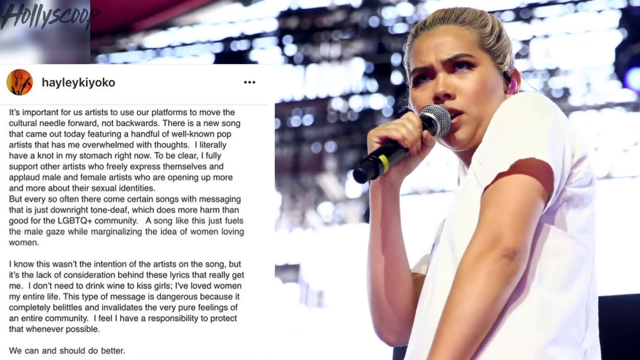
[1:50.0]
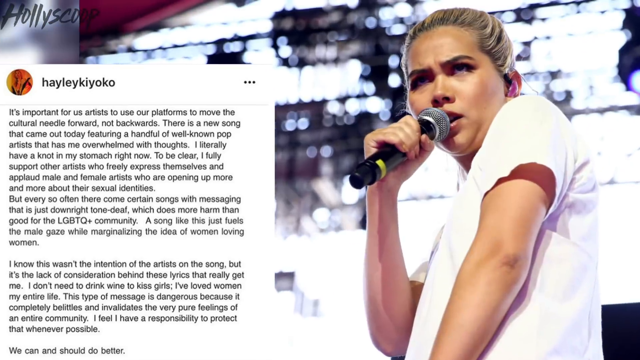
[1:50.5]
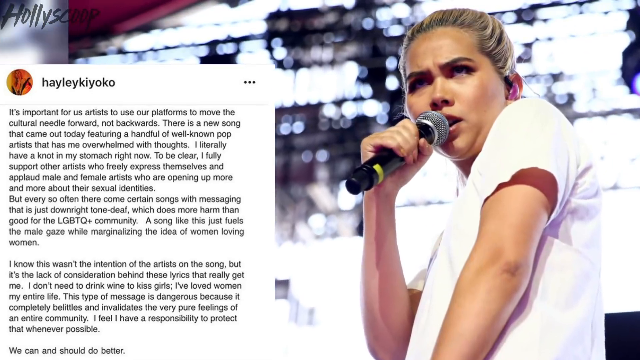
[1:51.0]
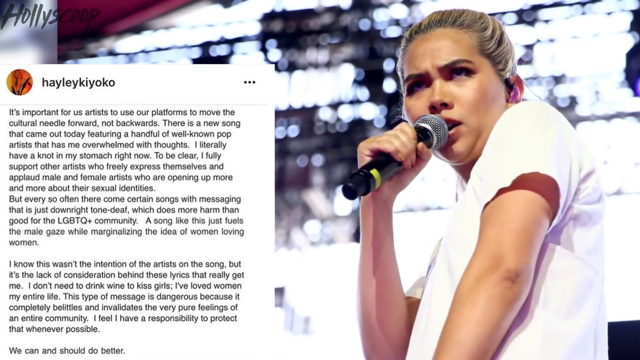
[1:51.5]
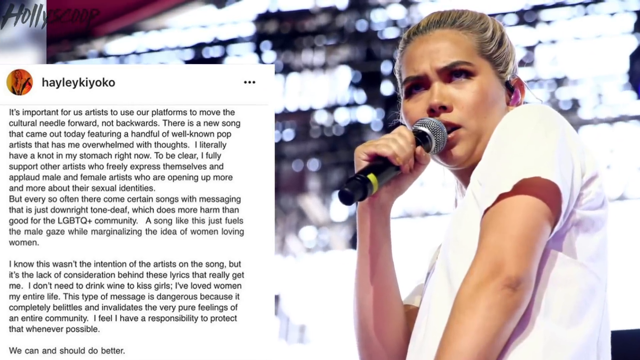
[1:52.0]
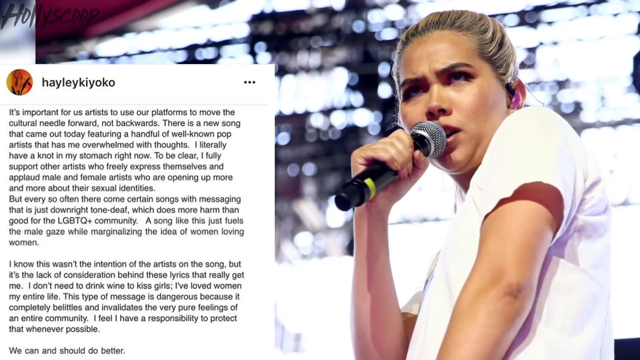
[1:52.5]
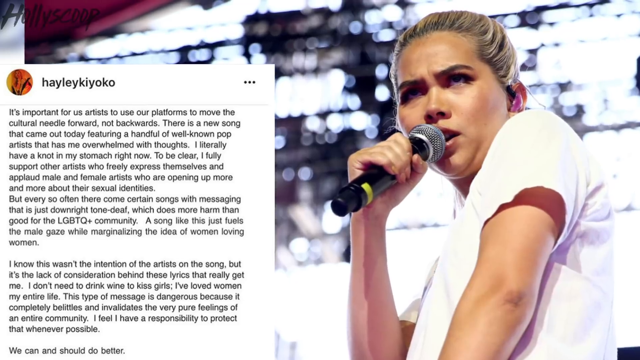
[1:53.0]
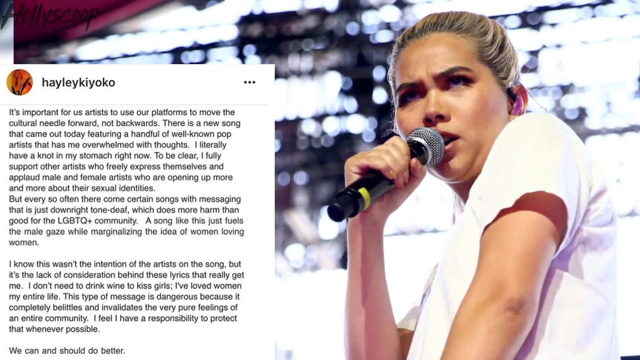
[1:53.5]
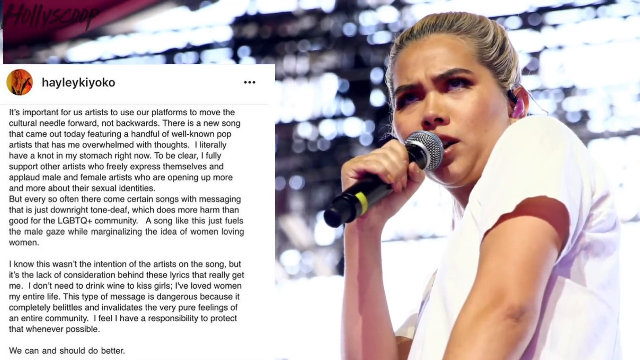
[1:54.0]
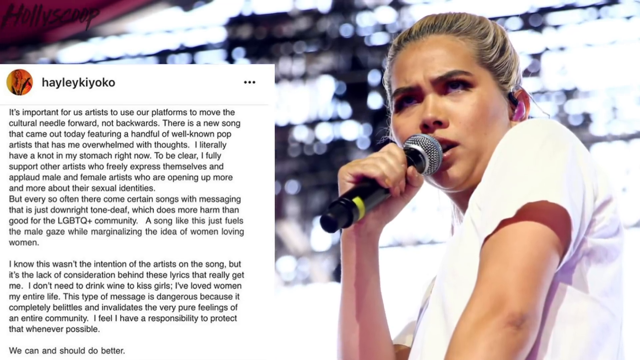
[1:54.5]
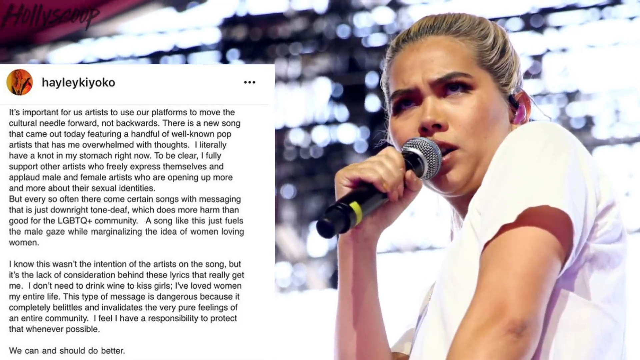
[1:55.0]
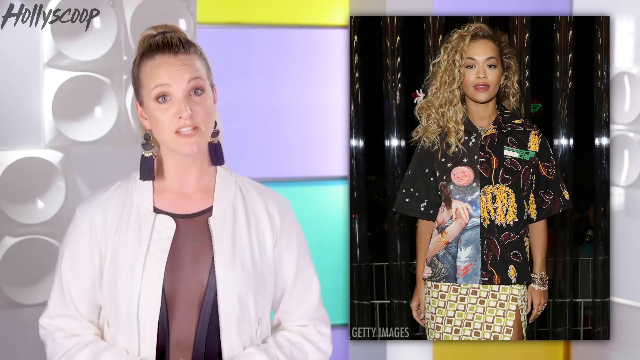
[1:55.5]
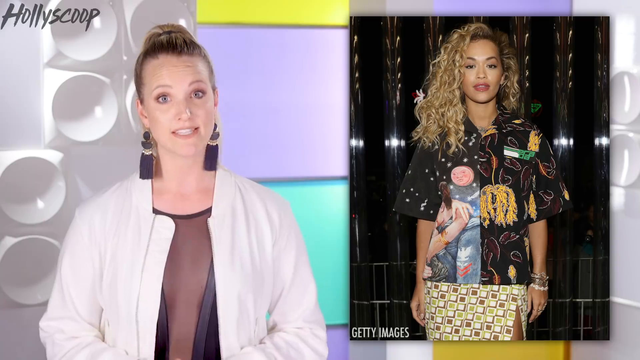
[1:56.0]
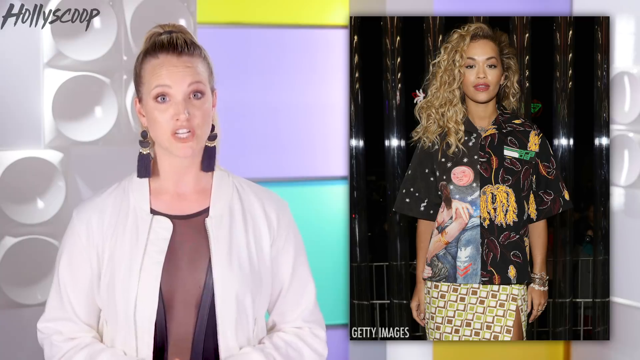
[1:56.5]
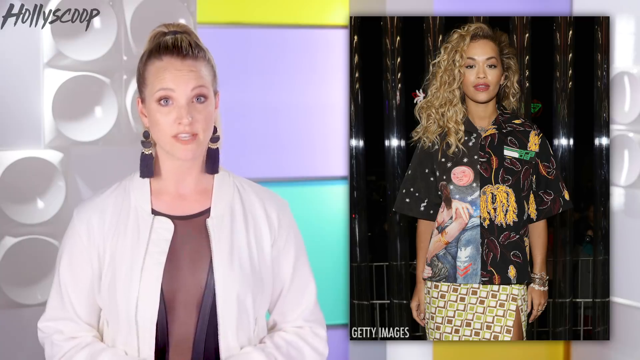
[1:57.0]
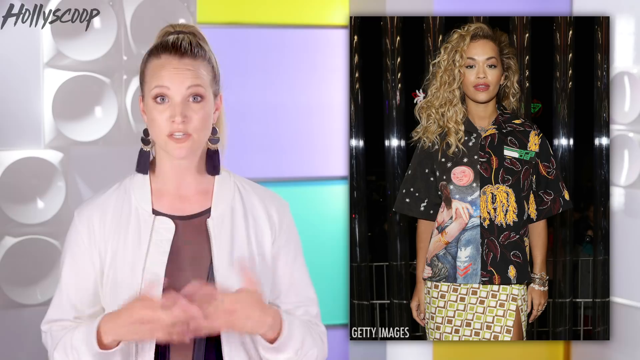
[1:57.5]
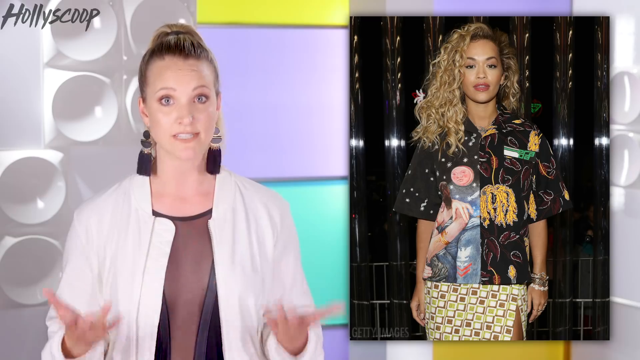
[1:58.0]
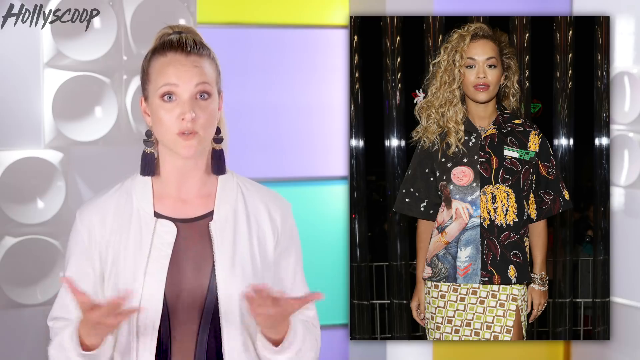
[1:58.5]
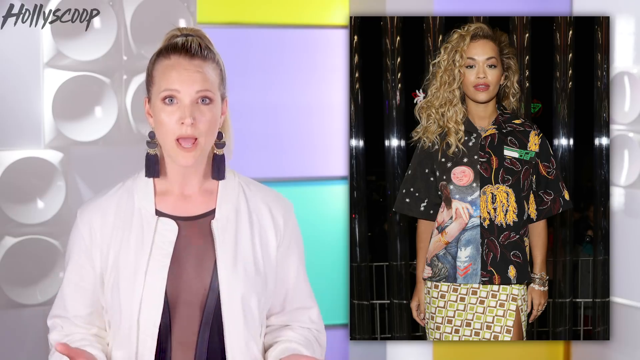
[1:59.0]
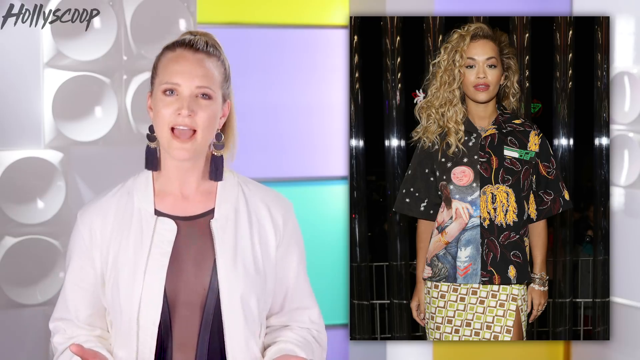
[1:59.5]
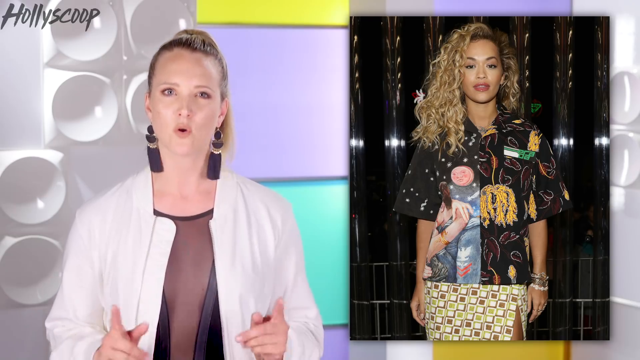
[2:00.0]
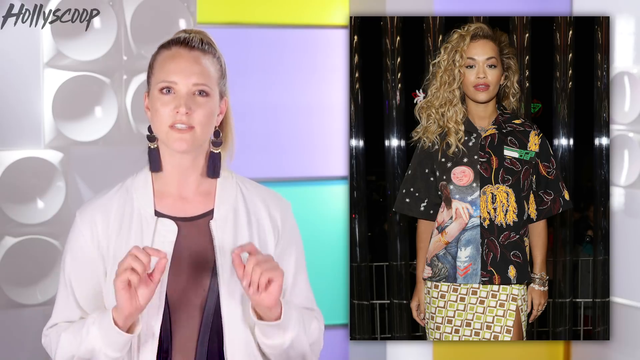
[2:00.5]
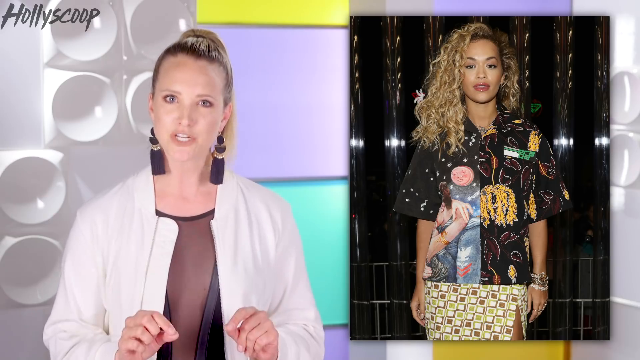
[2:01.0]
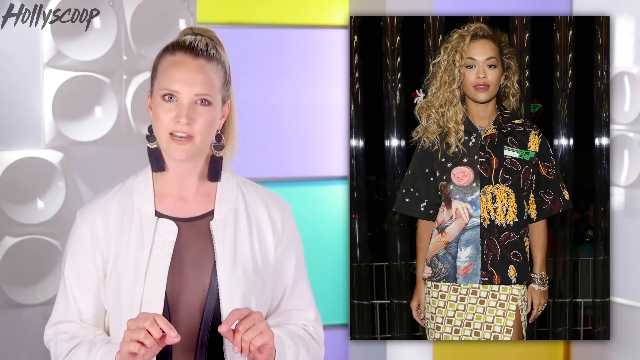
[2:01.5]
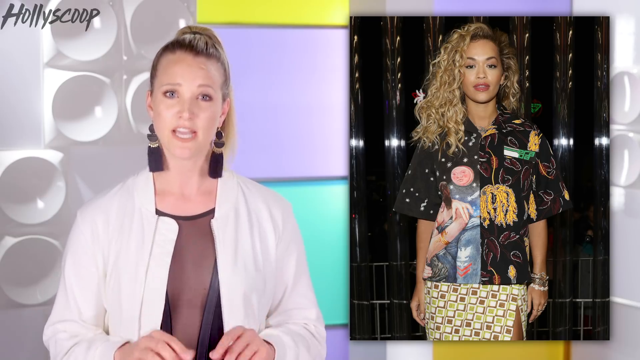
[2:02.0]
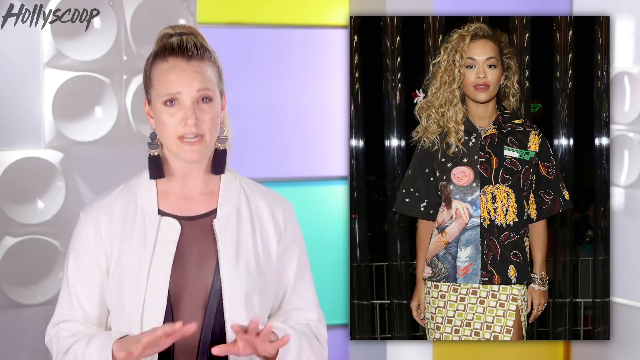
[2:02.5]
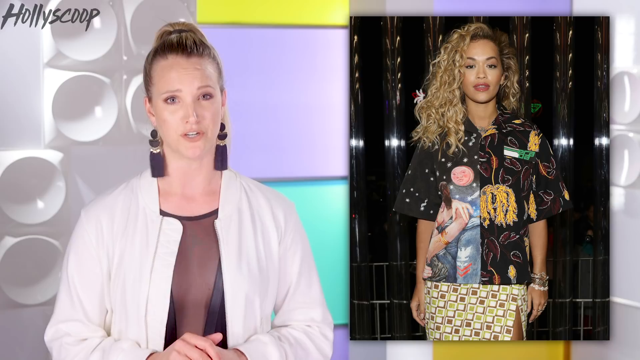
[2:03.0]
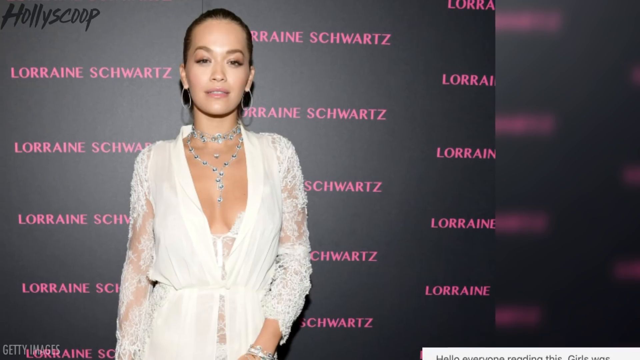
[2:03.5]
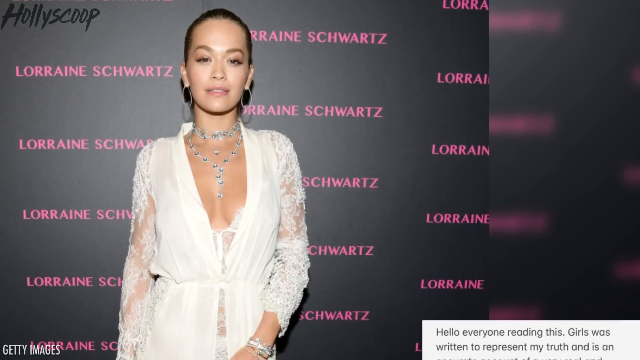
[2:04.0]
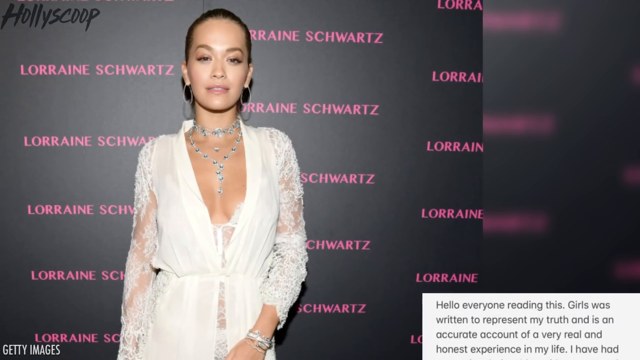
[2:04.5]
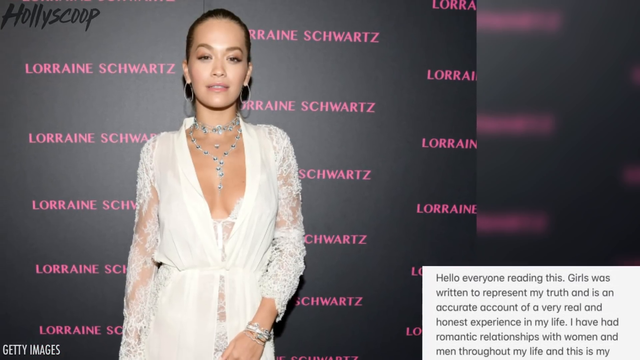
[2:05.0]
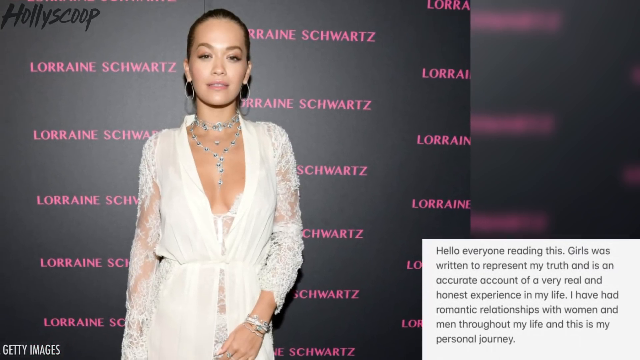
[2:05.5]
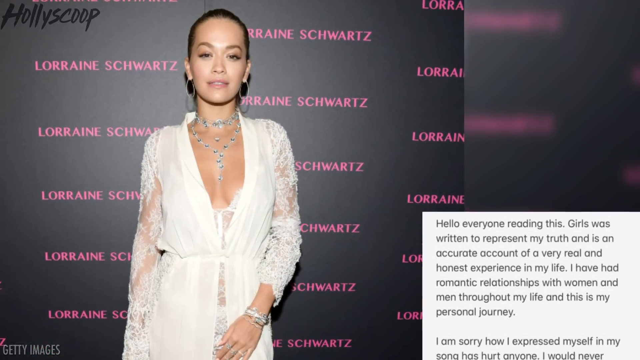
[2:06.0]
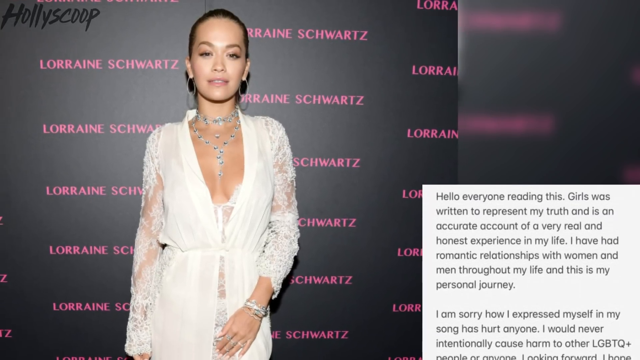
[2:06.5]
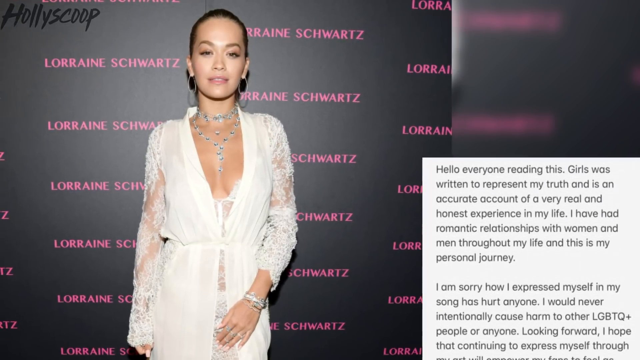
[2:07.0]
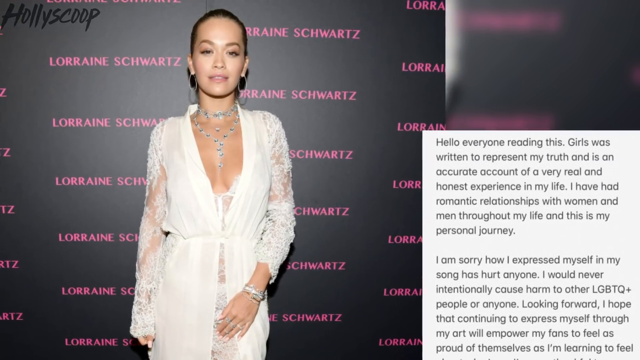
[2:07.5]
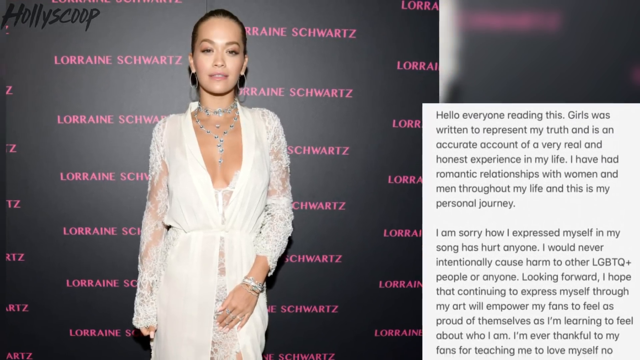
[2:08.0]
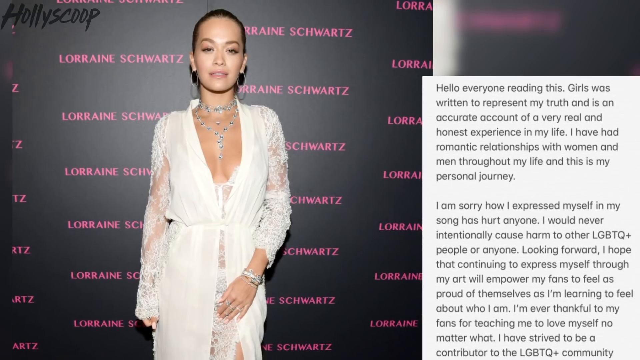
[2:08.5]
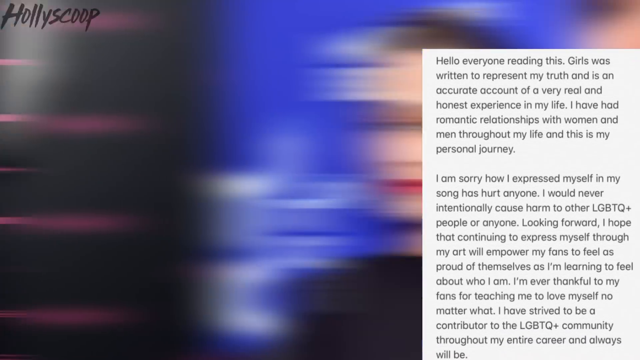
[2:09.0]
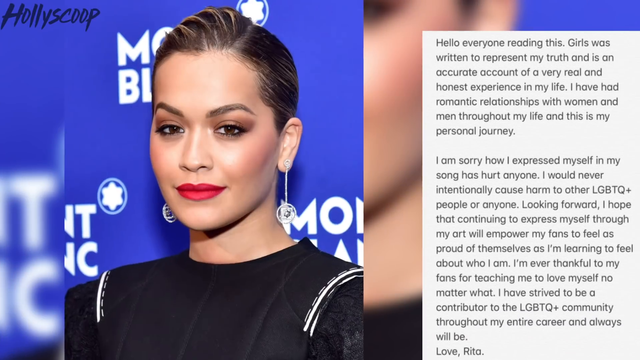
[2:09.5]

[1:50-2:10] The same Instagram post by Hayley Kiyoko is on the left side, and on the right Hayley Kiyoko performs on stage, holding a black microphone, in a white short-sleeve shirt with her hair pulled back. The picture slowly zooms in before cutting back to the host, who looks rather shocked and gestures showing both palms, as if trying to make sense of things, while Rita Ora's picture is shown on the right. The host then disappears and a single picture shows Rita Ora on the red carpet in a full white ensemble, hair pulled all the way back, with a deep plunging neckline and a prominent necklace that seems to be made of some sort of gemstones. Another red carpet picture is a portrait shot of Rita Ora with a classic red lip, in a black dress of some sort, her hair combed over. A post appears on the right side without an author shown; it reads in part: "Hello everyone reading this" and "I have had romantic relationships with women and men throughout my life and this is my personal journey", "I would never intentionally cause harm to other LGBTQ+ people or anyone", and "I'm ever thankful to my fans for teaching me to love myself no matter what. I have strived to be a contributor to the LGBTQ+ community throughout my entire career and always will be." Given its context and the portrait beside it on the left, the post is apparently written by Rita Ora.